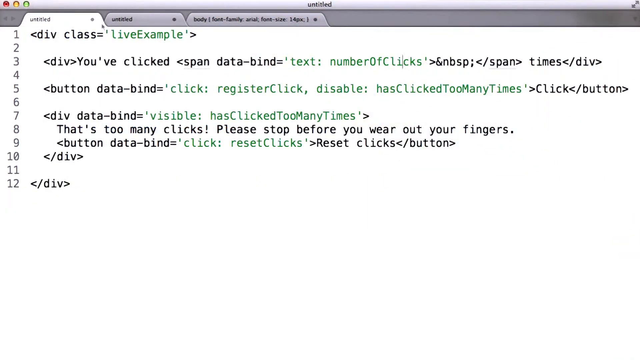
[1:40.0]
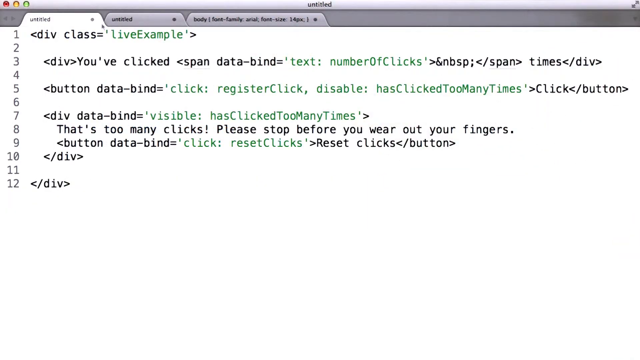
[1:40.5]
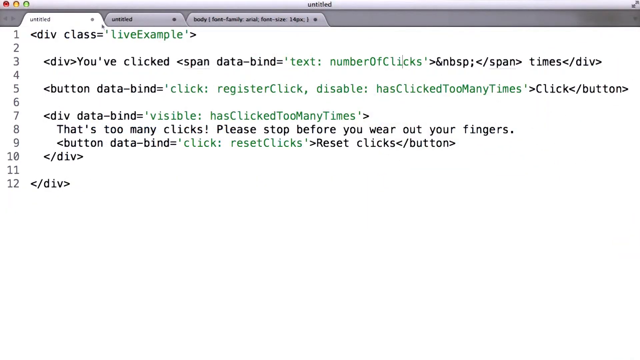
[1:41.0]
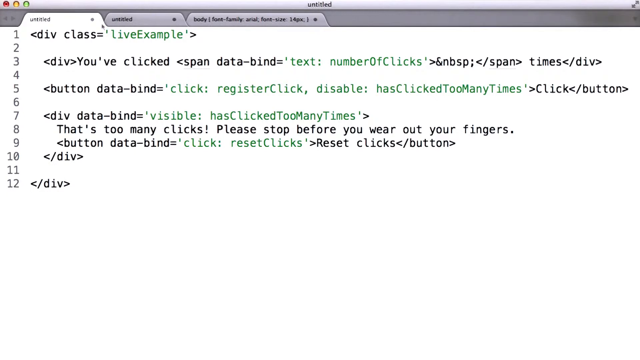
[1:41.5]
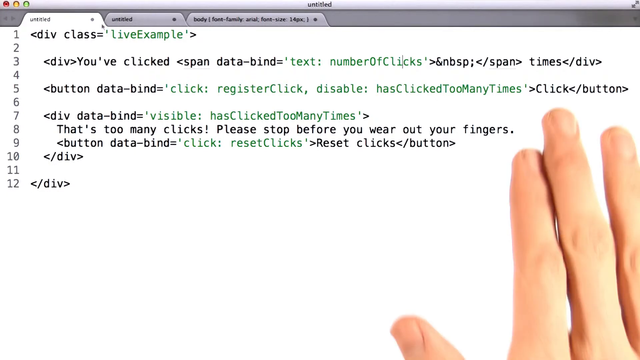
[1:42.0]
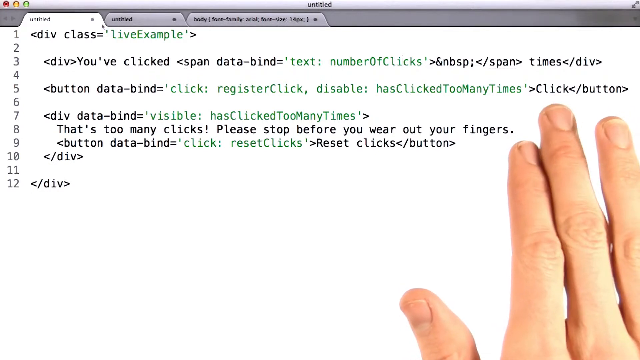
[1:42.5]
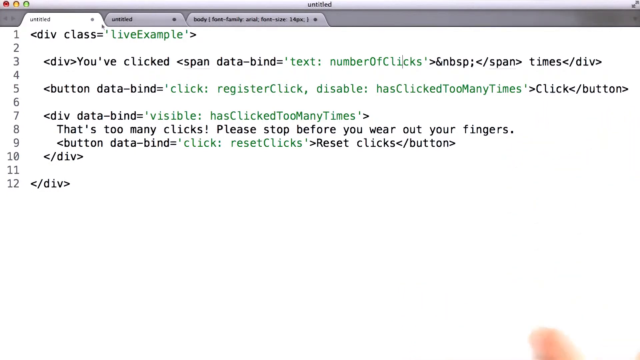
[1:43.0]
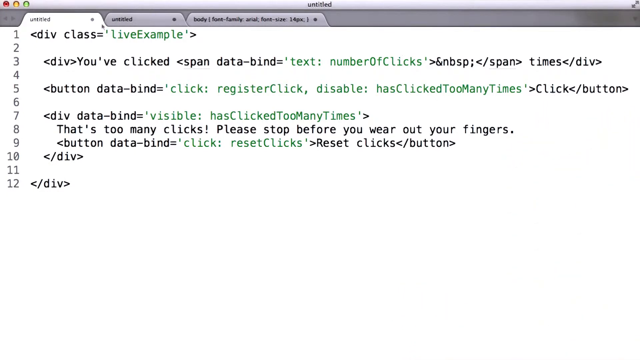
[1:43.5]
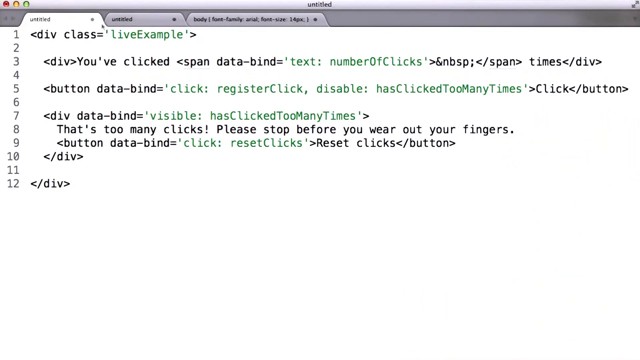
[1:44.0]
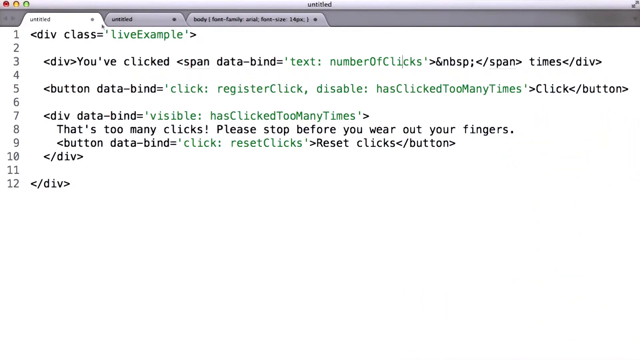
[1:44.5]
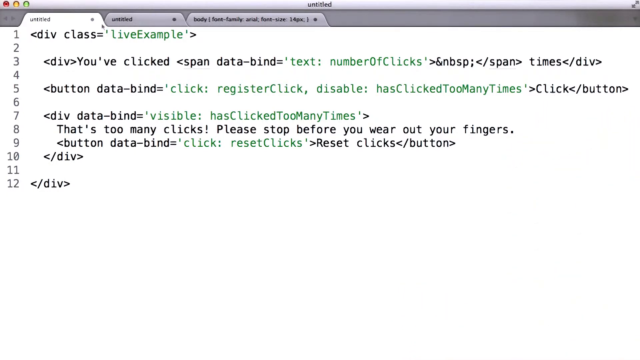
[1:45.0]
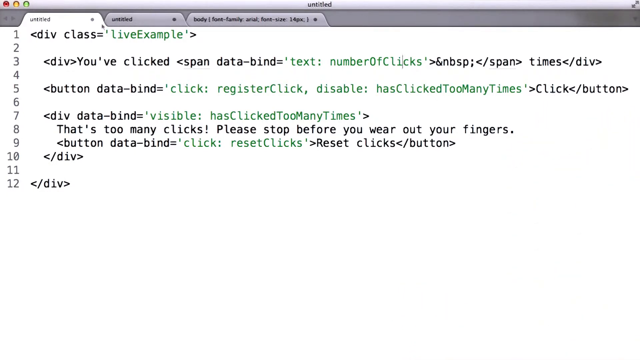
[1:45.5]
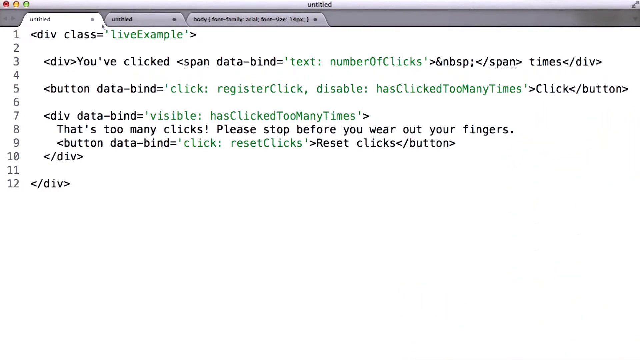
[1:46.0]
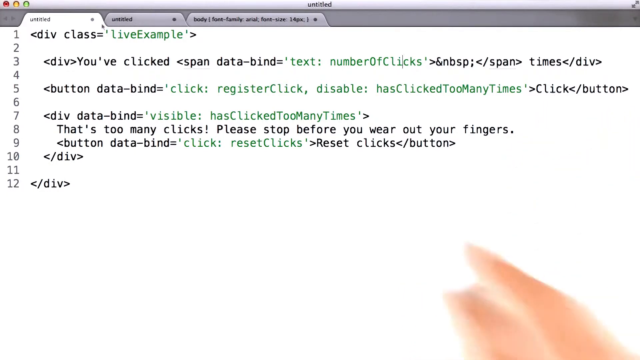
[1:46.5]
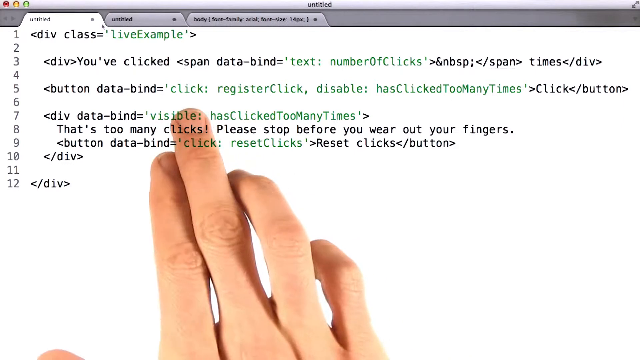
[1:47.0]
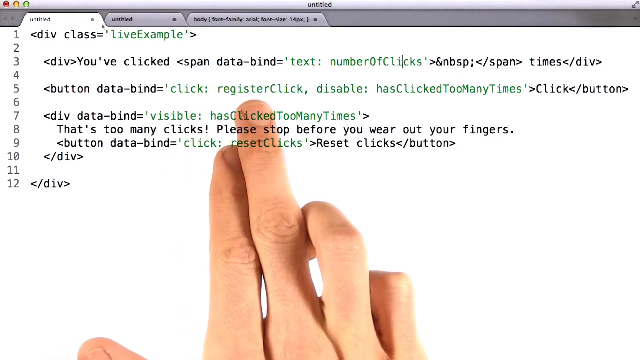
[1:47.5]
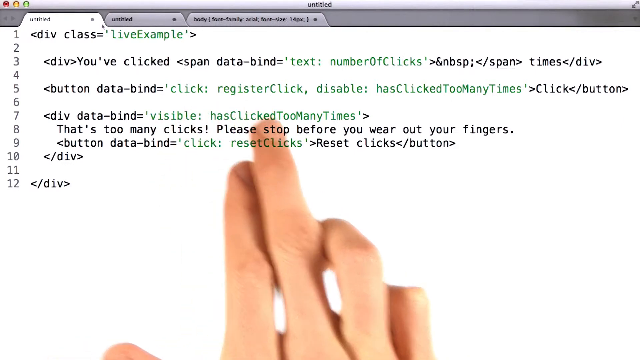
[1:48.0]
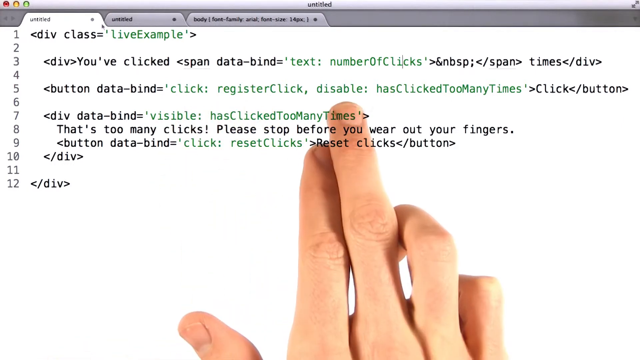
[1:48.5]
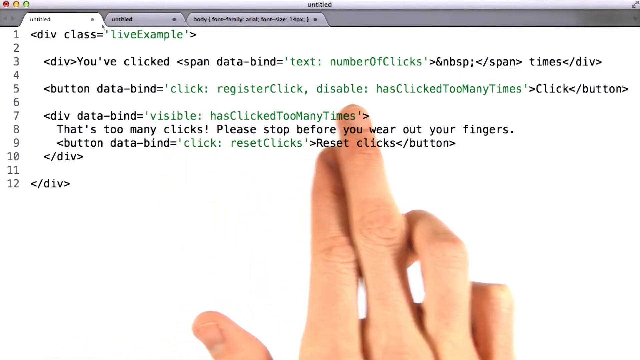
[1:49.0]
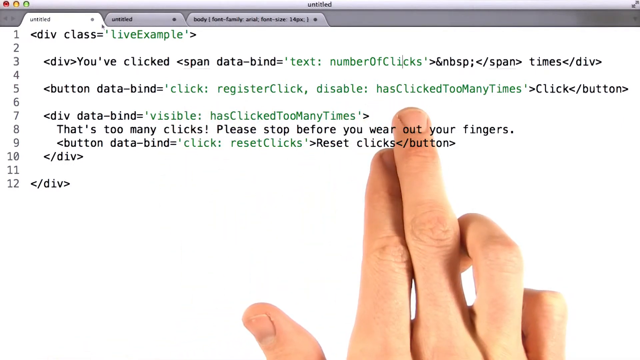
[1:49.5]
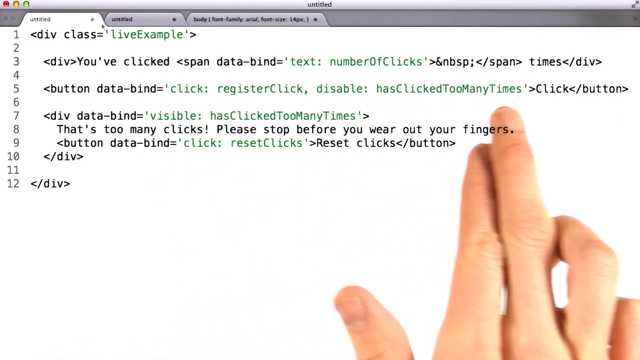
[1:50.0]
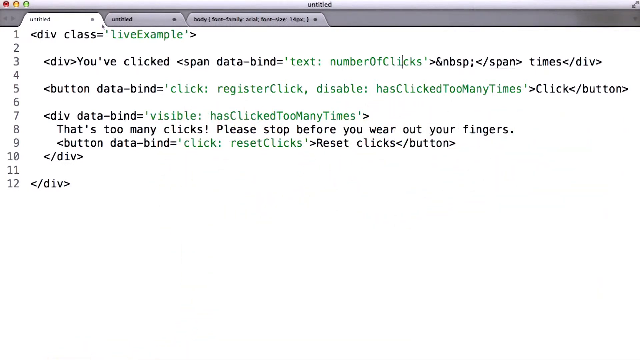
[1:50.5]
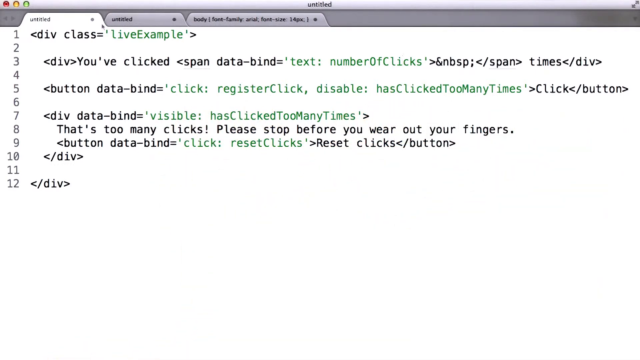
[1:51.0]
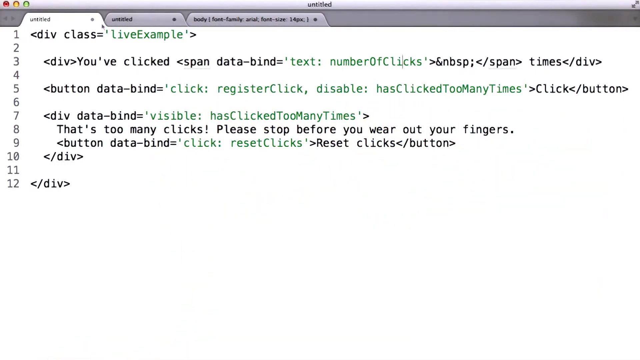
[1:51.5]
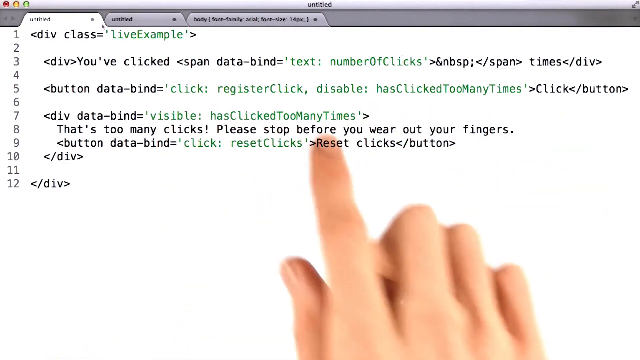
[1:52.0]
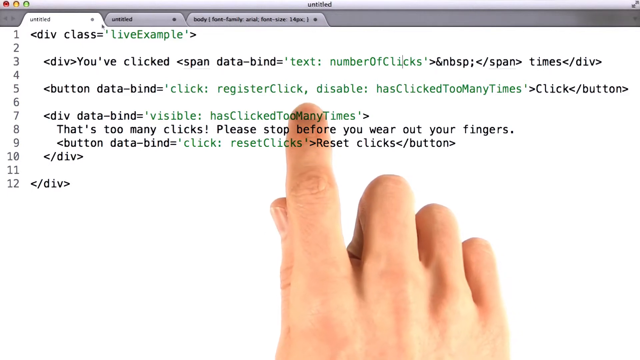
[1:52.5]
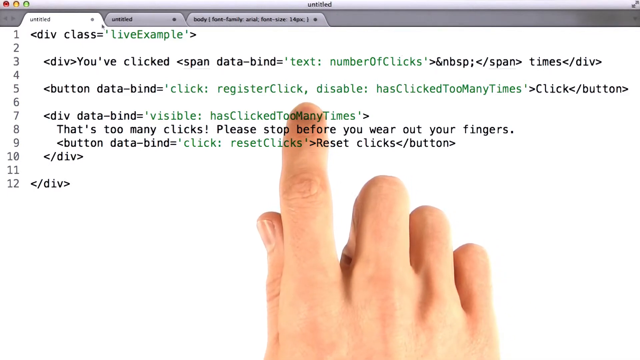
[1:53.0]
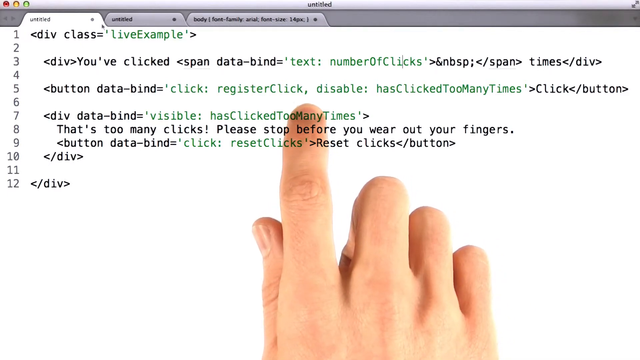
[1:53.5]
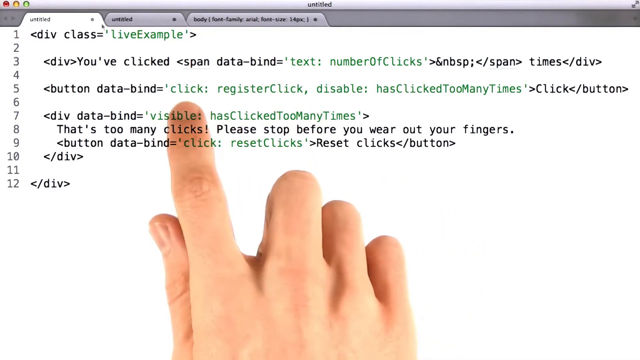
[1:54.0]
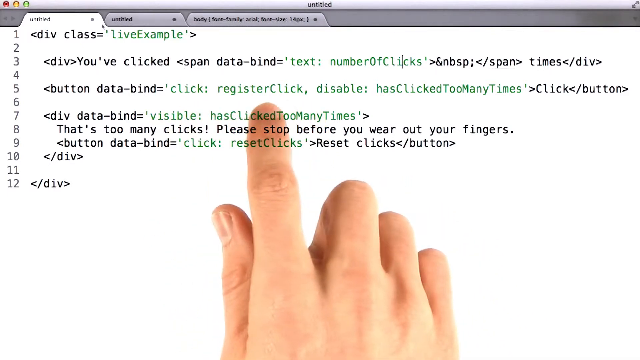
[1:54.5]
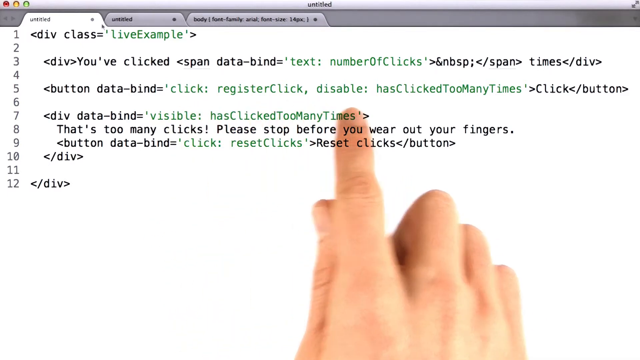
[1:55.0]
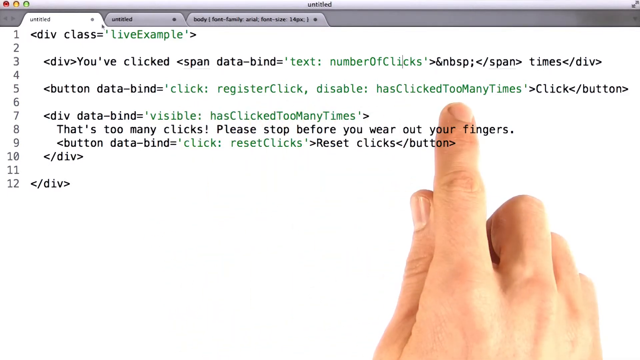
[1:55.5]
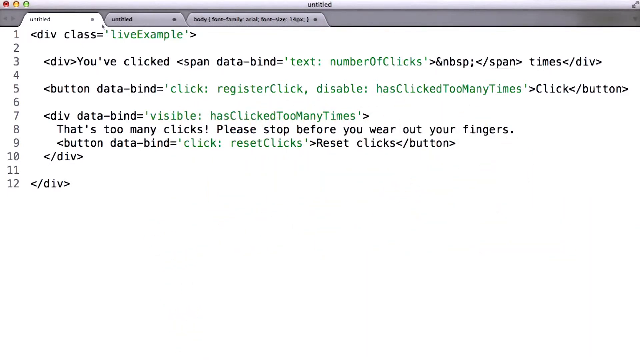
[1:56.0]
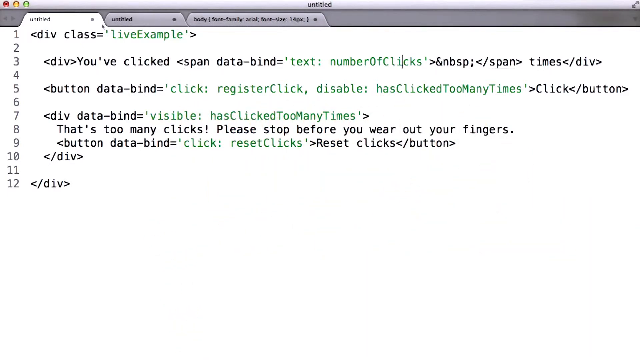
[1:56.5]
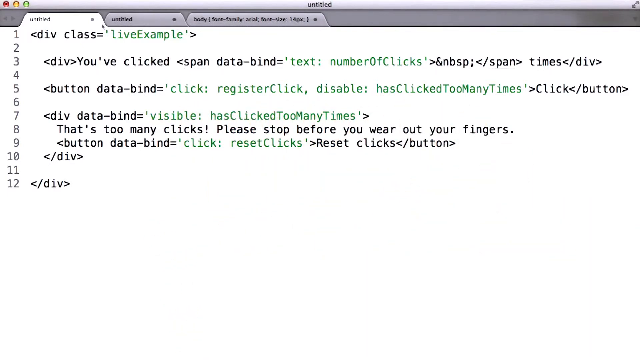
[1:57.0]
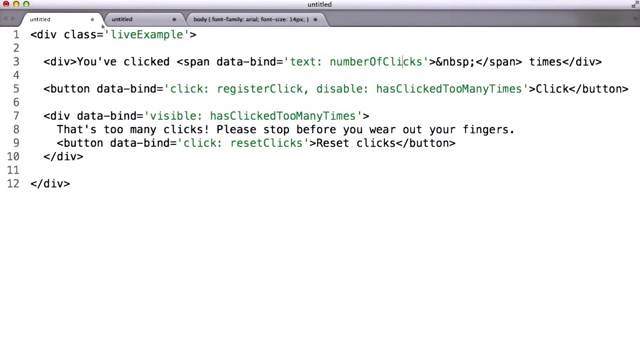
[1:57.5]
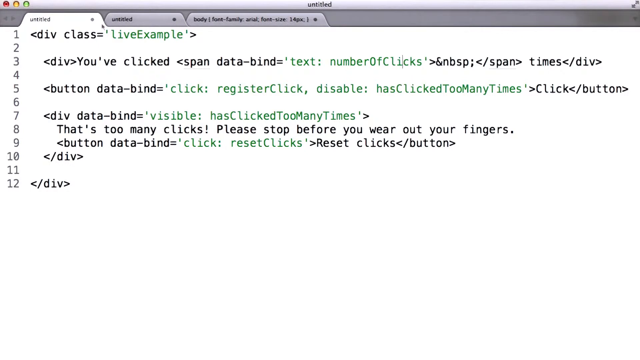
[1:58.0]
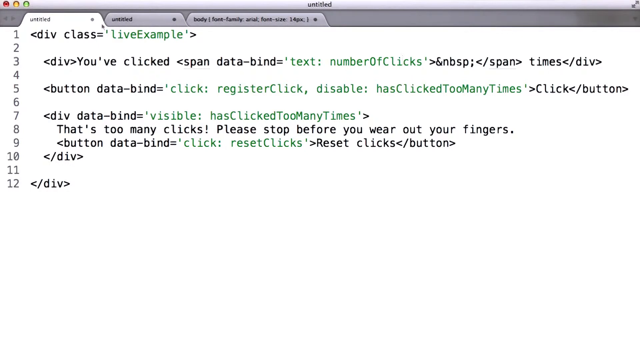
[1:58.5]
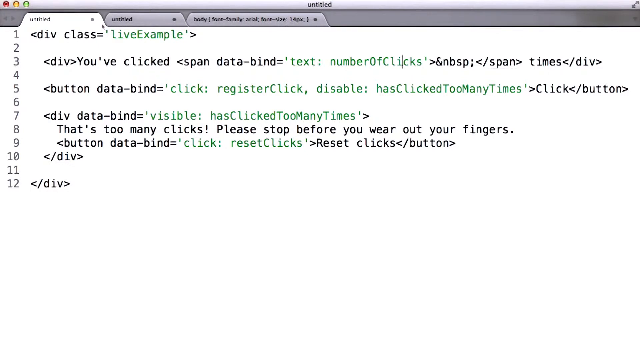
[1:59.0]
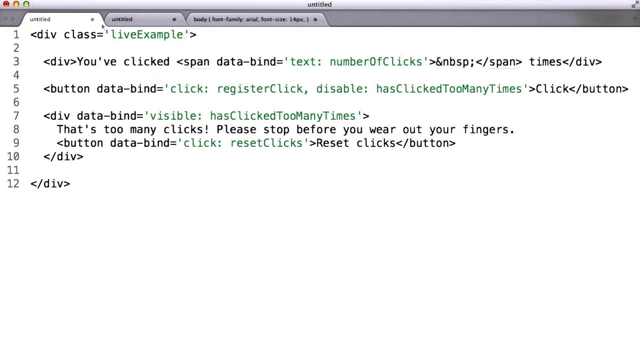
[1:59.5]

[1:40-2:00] The same page is shown with "register click, disable: has clicked too many times", and the hand touches each item. Text includes "visible: has clicked too many times", "That's too many clicks, please stop before you wear out your fingers", "button data-bind = click: reset clicks", "Reset clicks", "You've clicked" and "span data-bind = text: number of clicks". A specific line is highlighted: "click: register click, disable: has clicked too many times". Also shown is "div data-bind = visible: has clicked too many times" and "That's too many clicks". The page is a companion page to the coding page.